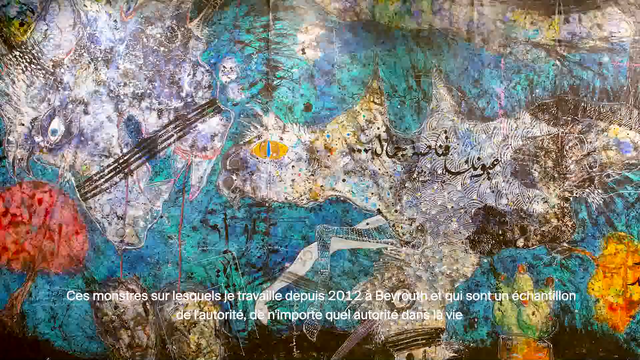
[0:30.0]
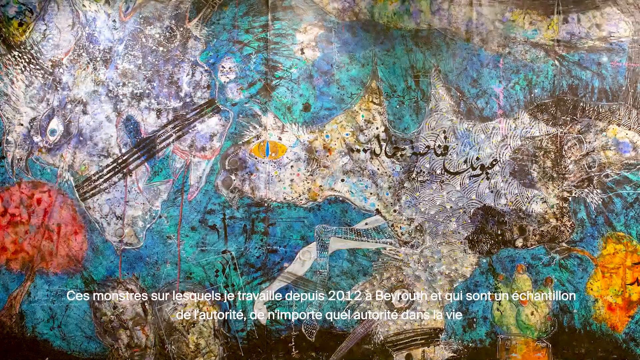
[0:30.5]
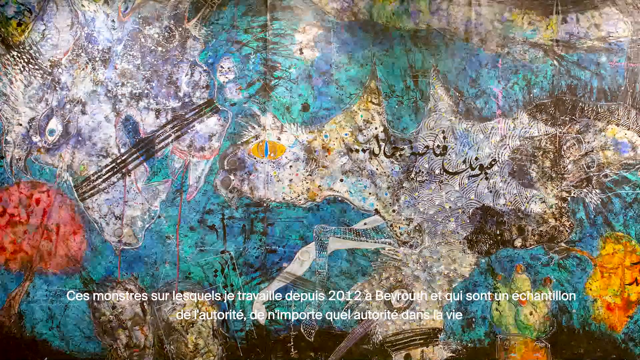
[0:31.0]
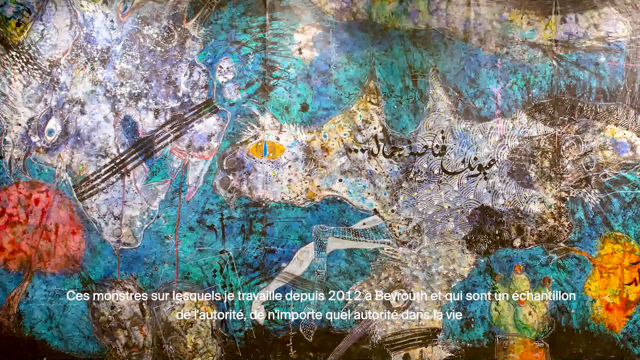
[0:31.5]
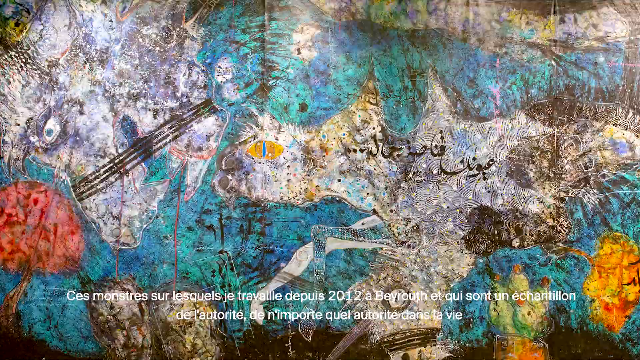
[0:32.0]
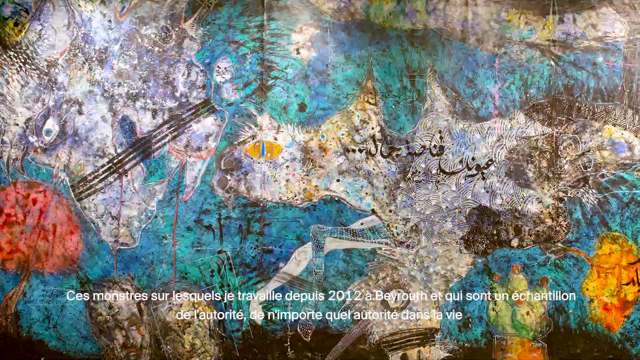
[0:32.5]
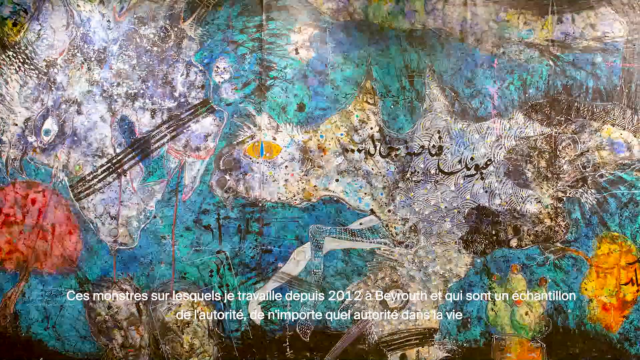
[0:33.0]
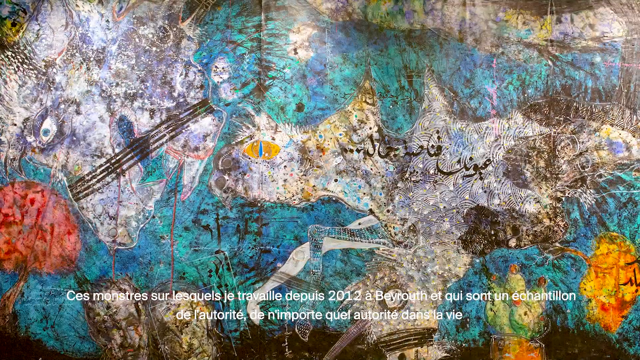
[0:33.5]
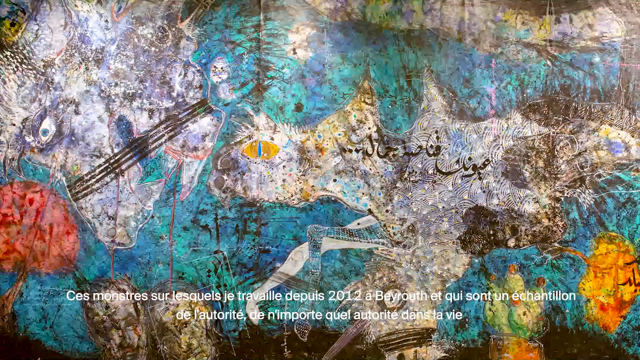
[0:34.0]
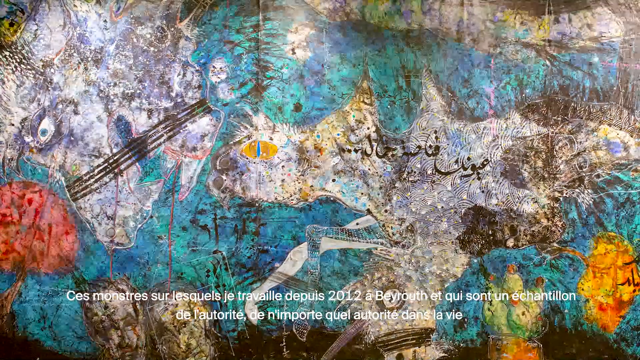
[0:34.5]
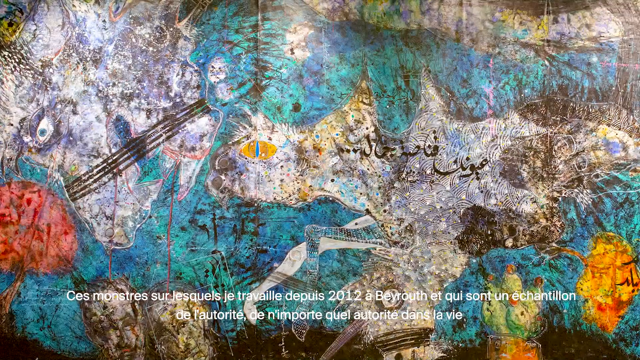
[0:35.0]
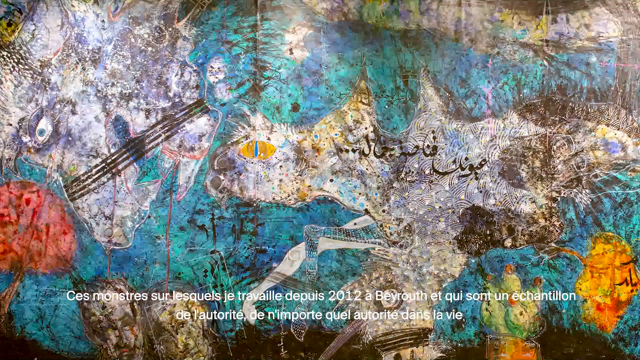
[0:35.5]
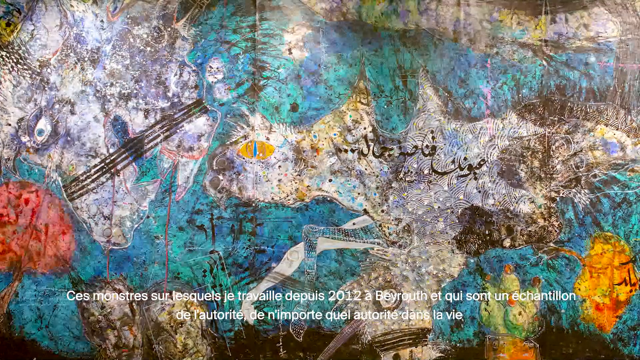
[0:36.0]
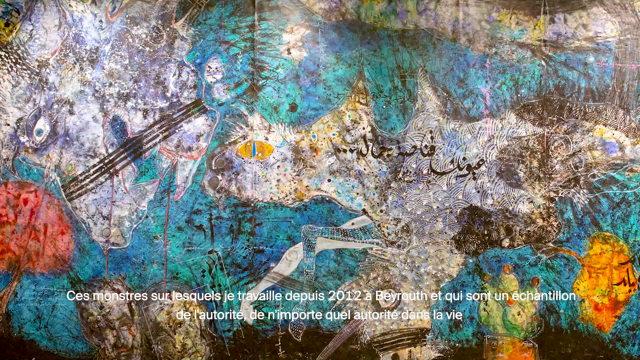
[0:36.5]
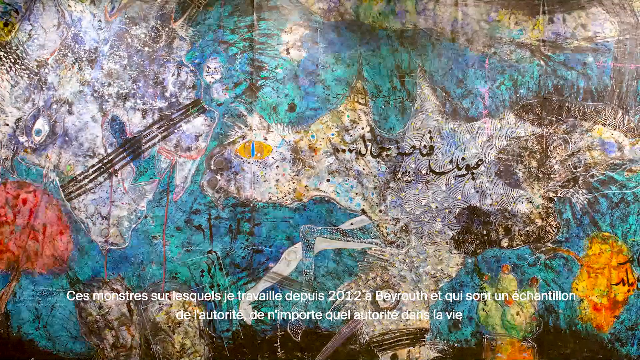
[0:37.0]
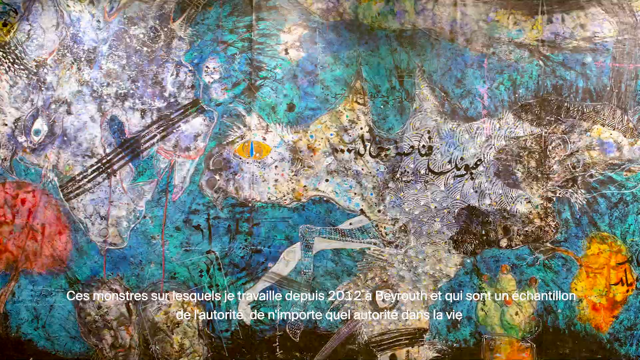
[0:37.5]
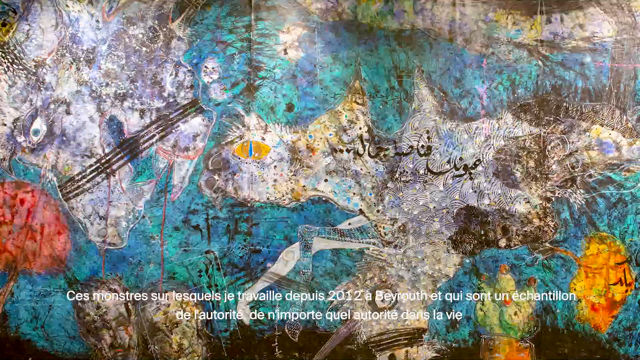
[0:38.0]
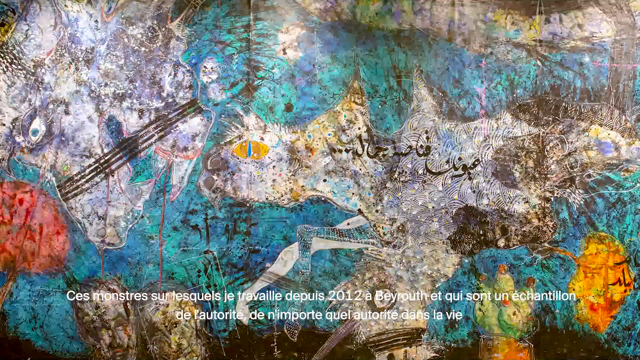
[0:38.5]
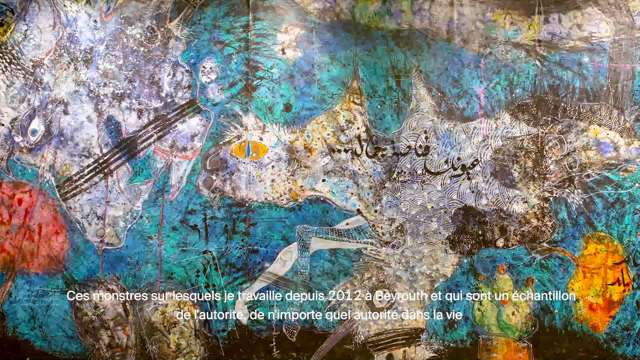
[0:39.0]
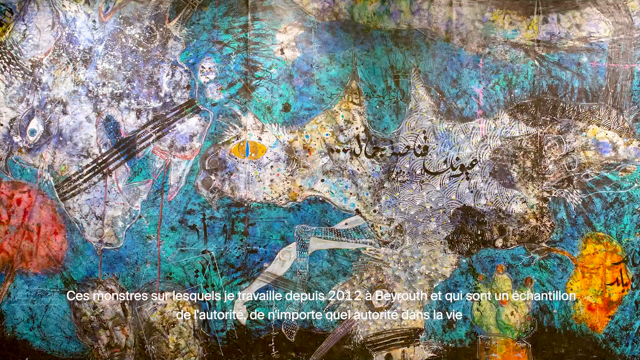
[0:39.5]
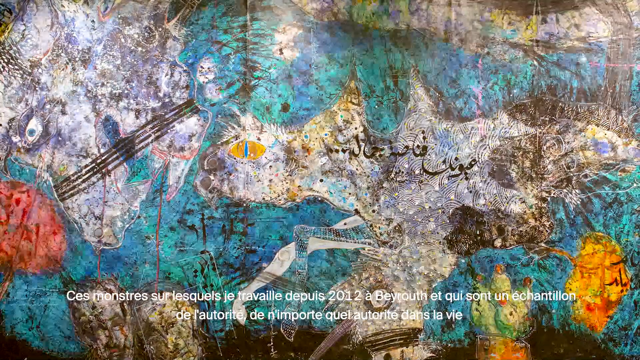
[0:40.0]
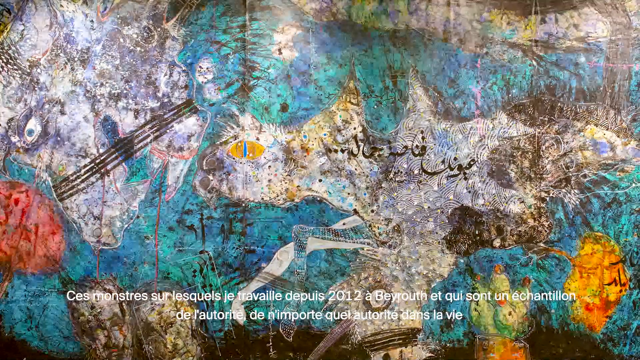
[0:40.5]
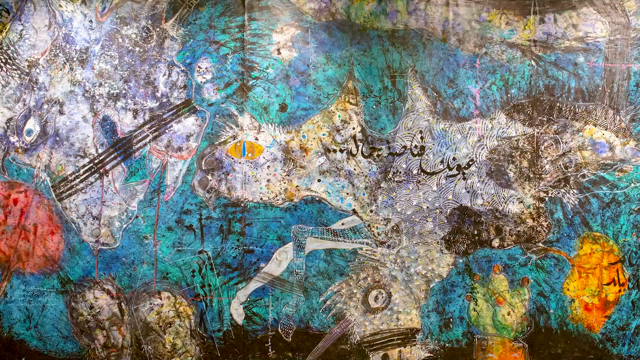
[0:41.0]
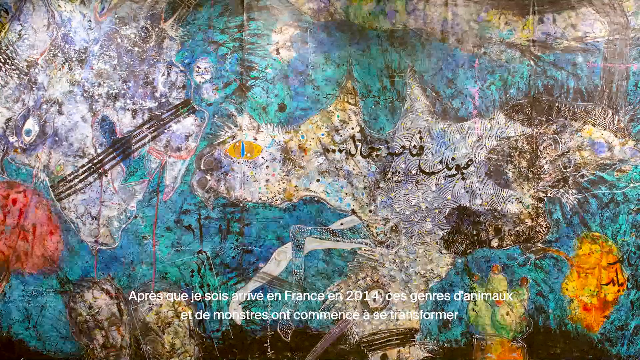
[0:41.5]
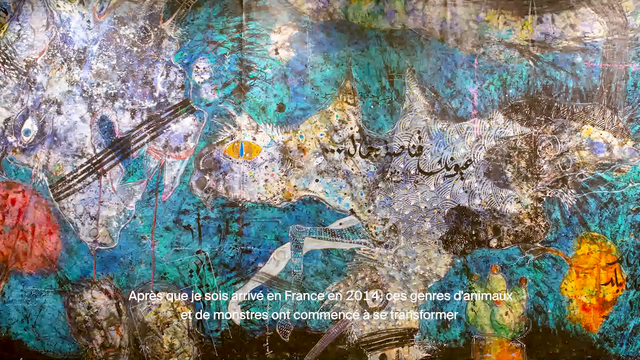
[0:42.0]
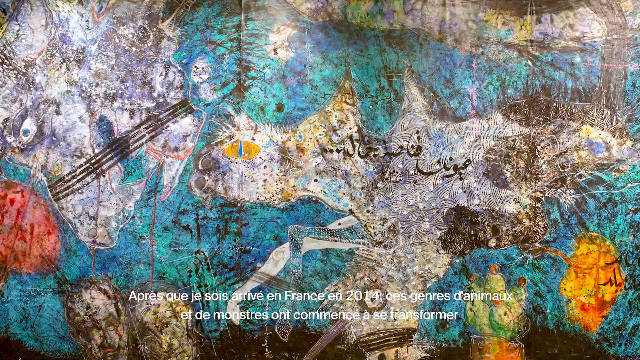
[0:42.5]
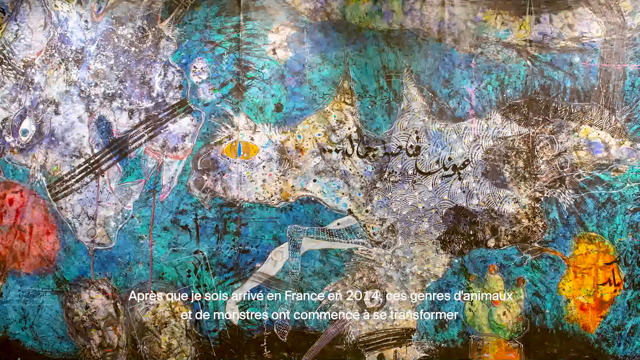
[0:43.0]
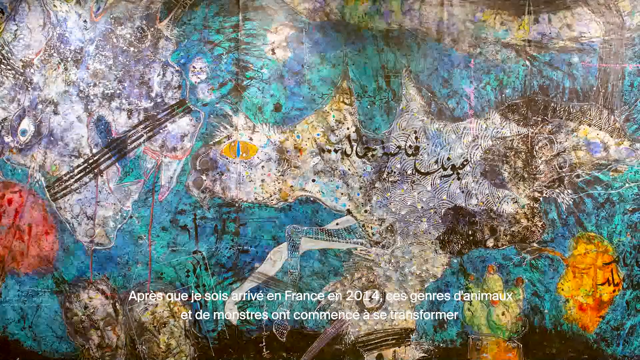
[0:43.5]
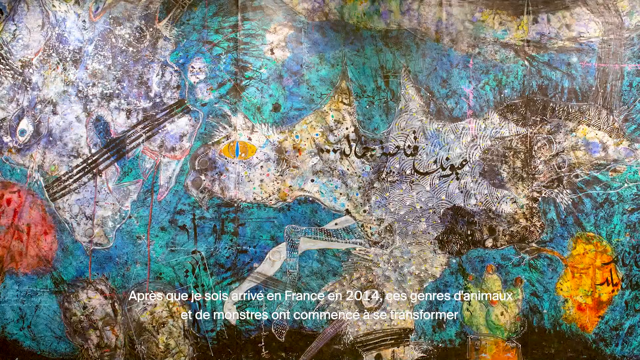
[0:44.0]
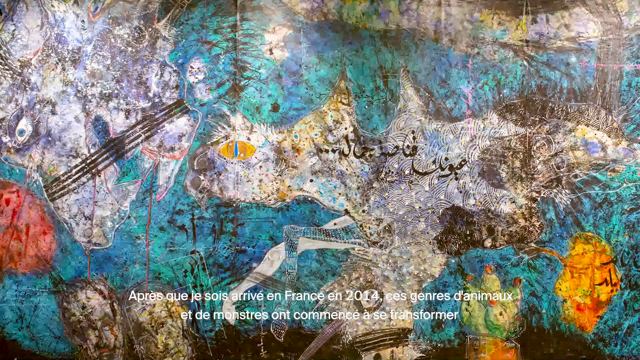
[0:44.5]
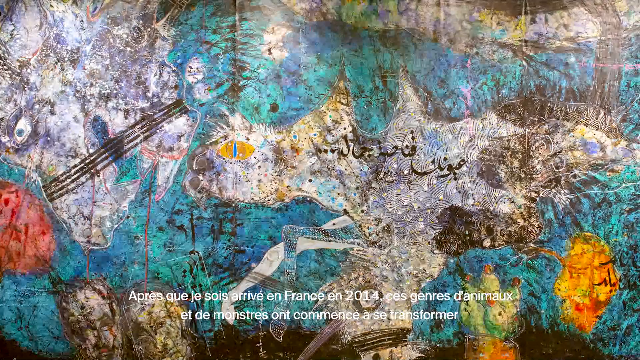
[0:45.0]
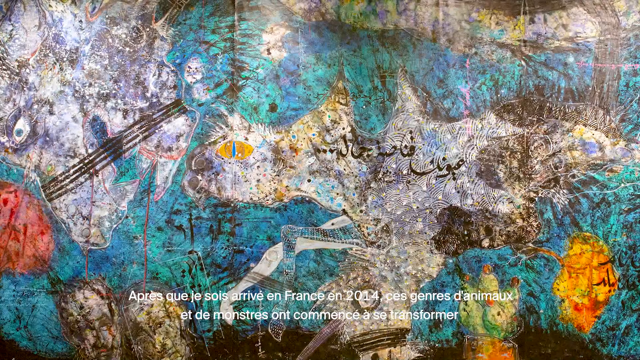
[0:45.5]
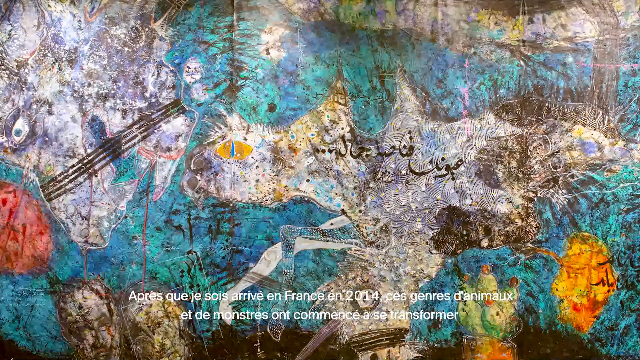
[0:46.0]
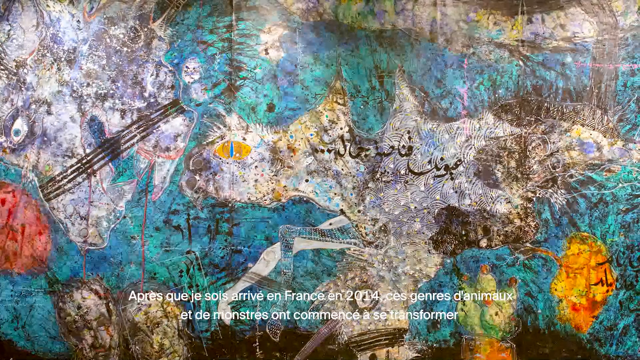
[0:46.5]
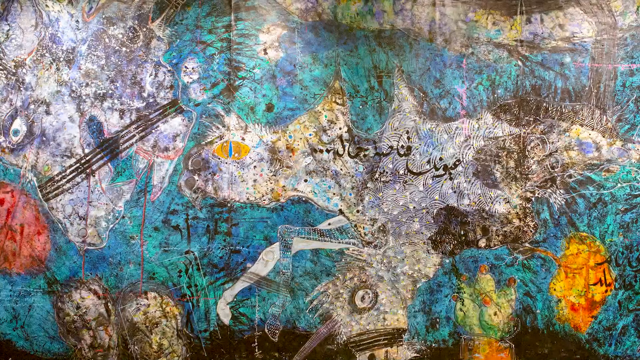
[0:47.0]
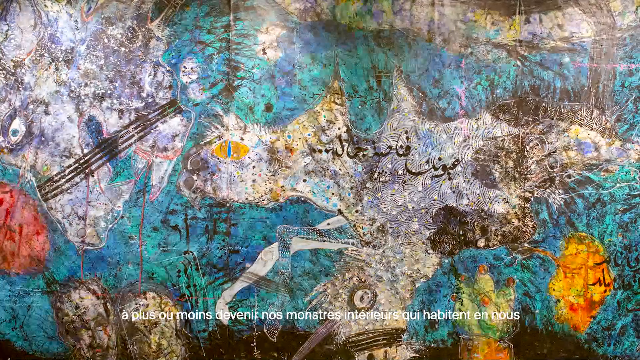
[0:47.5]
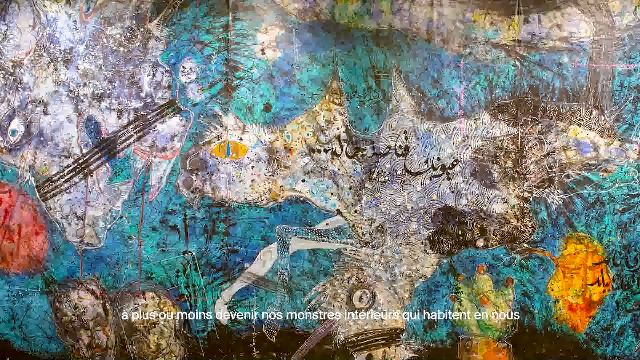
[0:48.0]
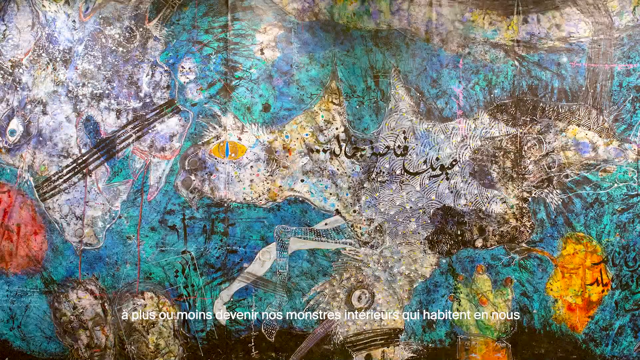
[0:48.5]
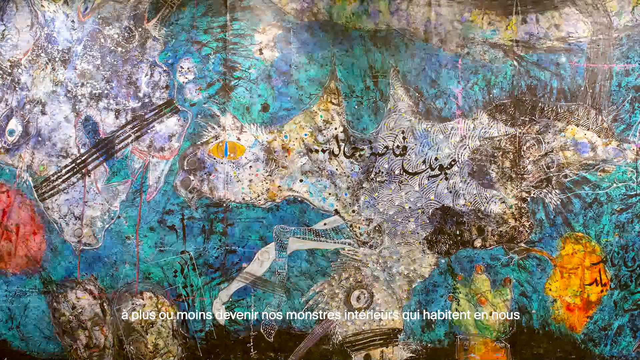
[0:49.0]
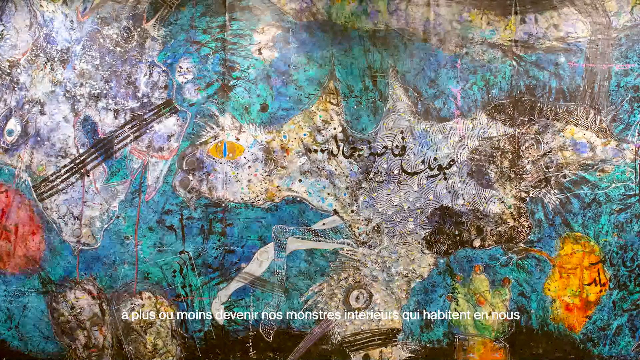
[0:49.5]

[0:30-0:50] A painting in different colors is shown; it looks like there is some sort of dog and cat in it. The camera slowly moves to the right to show different parts of the painting. White subtitles in a different language appear at the bottom. The video stays on the painting, which appears to be very large. The camera seems to focus primarily on the center, which looks like some sort of animal with different colors around it, including blues, oranges and greens, and there seem to be animals inside the painting.